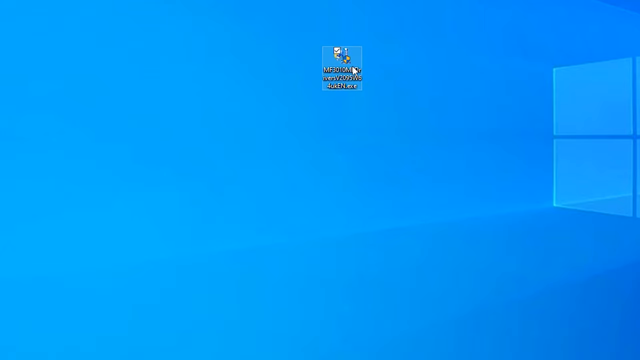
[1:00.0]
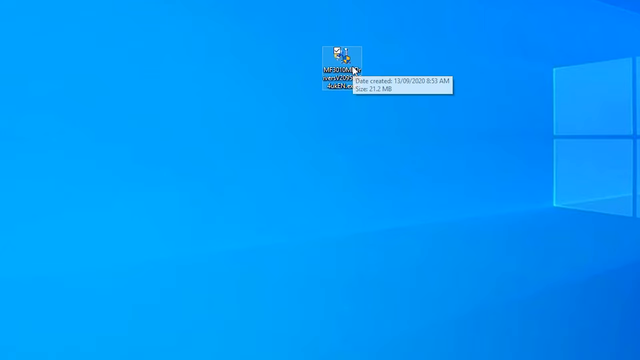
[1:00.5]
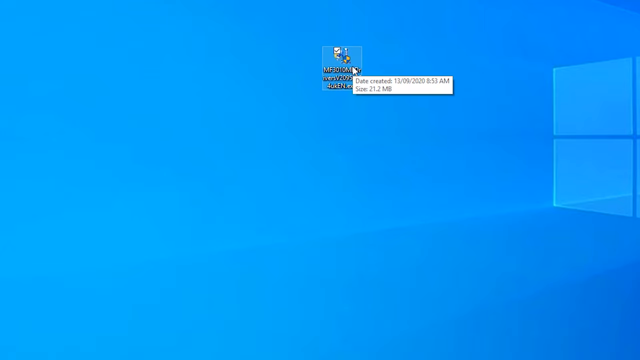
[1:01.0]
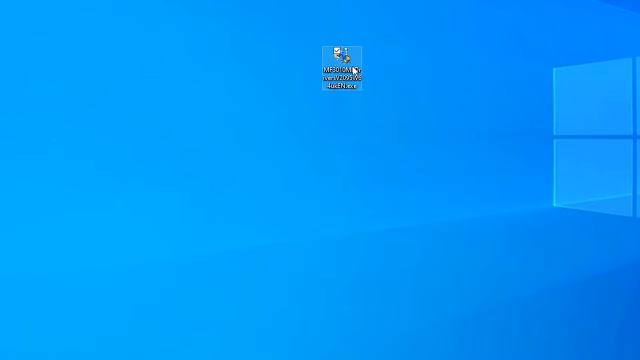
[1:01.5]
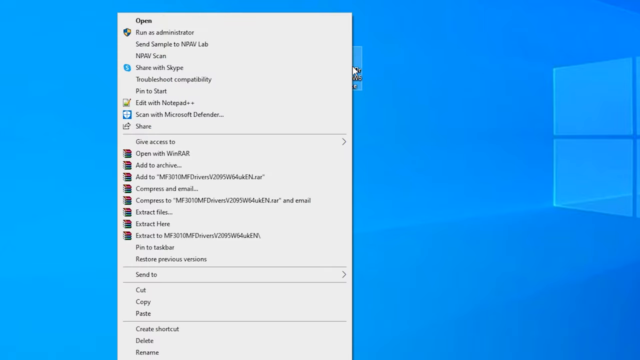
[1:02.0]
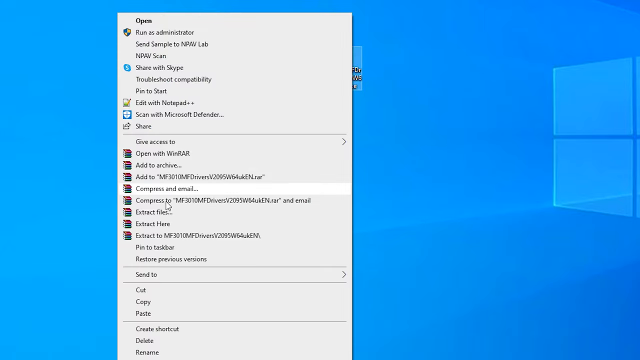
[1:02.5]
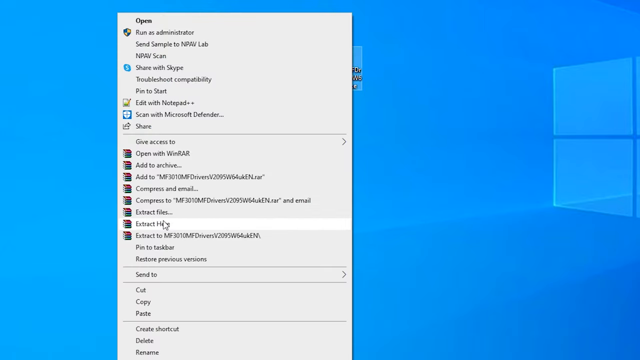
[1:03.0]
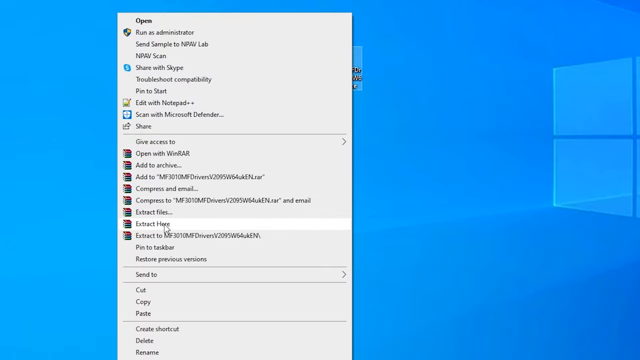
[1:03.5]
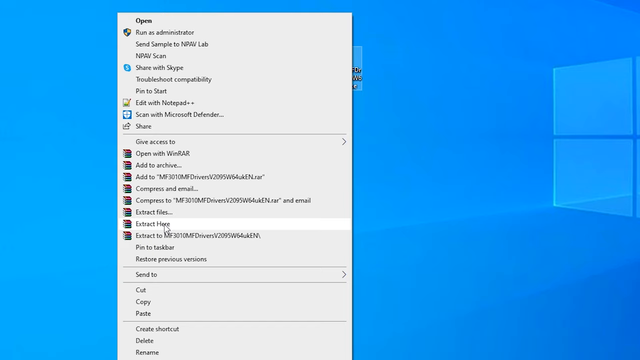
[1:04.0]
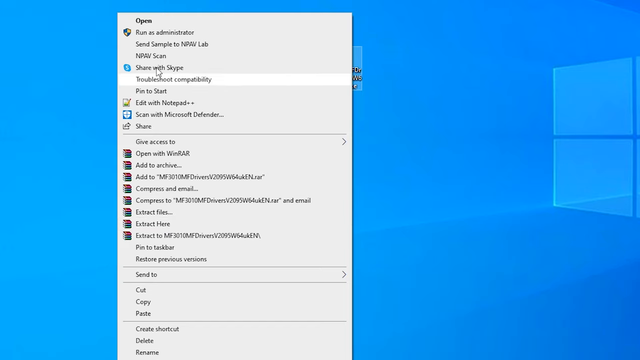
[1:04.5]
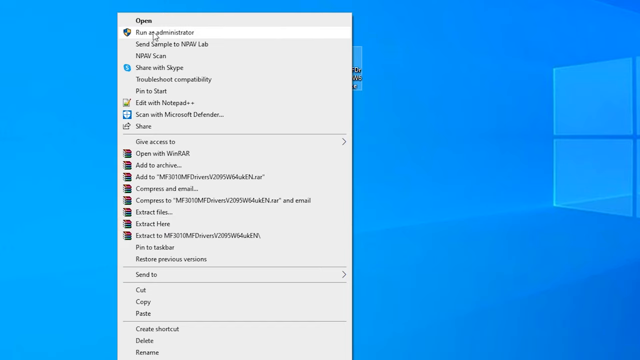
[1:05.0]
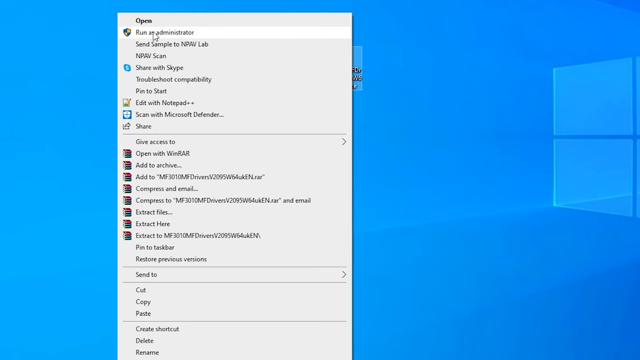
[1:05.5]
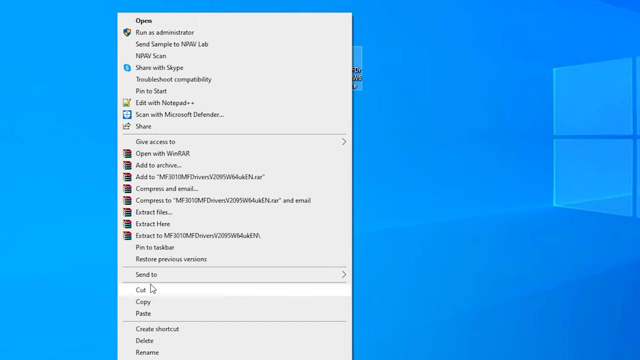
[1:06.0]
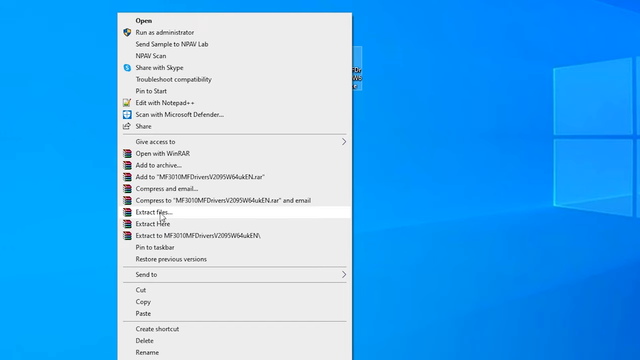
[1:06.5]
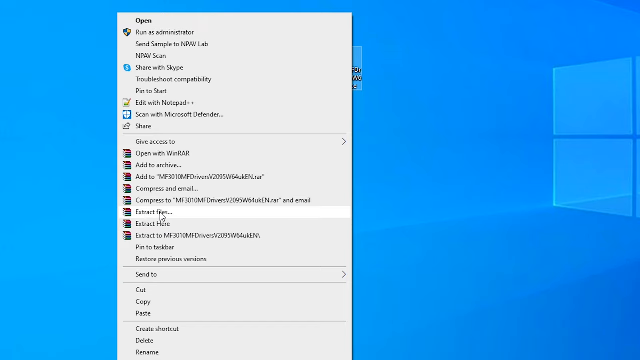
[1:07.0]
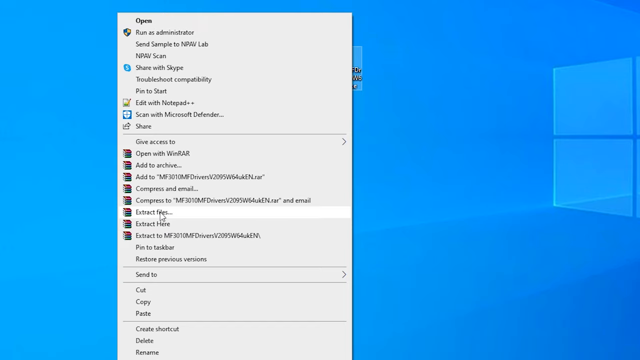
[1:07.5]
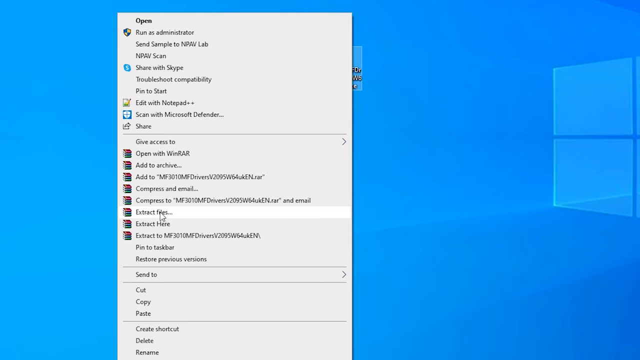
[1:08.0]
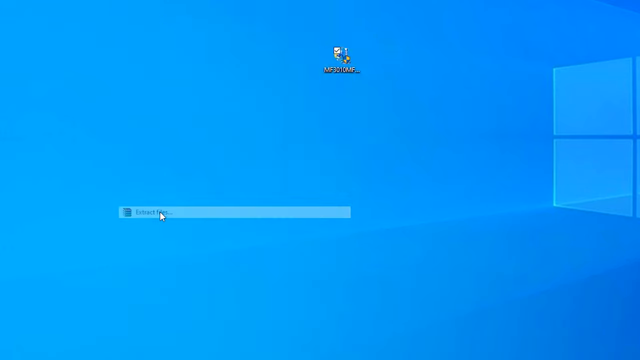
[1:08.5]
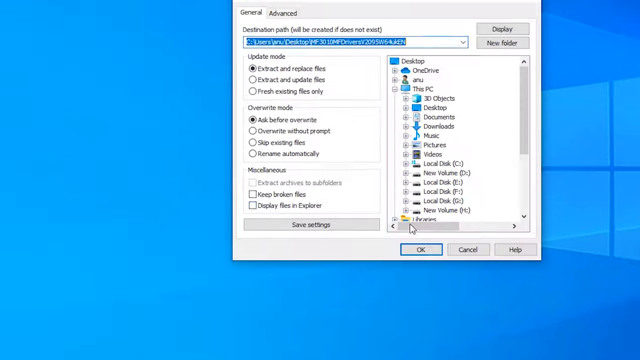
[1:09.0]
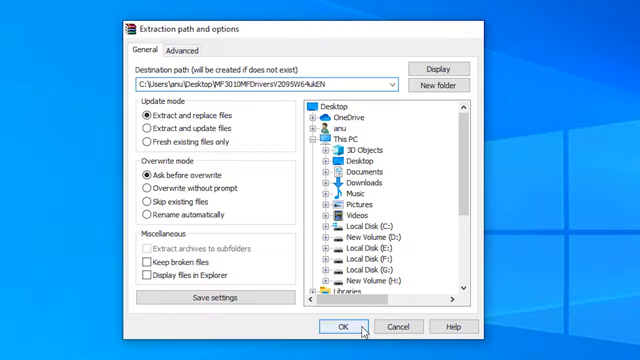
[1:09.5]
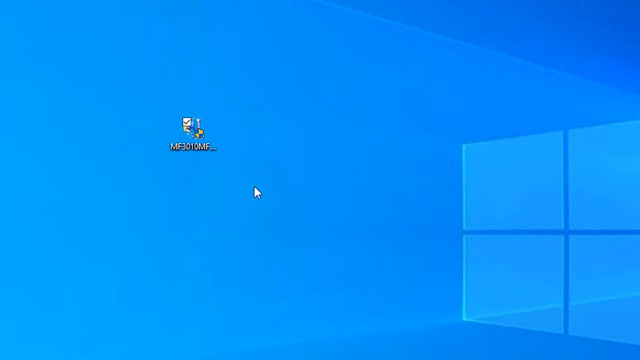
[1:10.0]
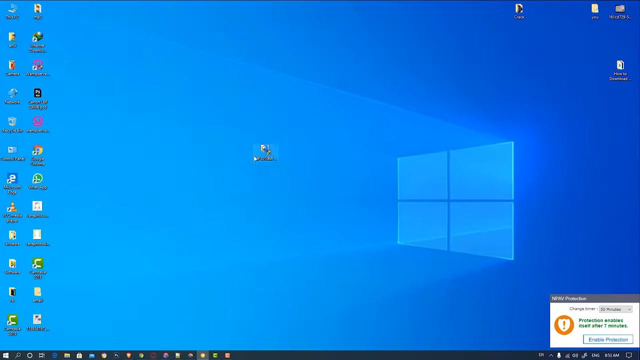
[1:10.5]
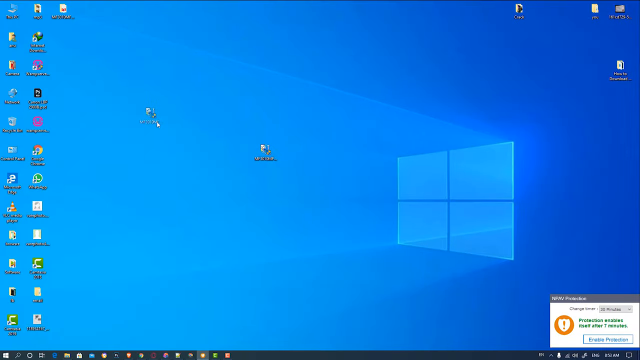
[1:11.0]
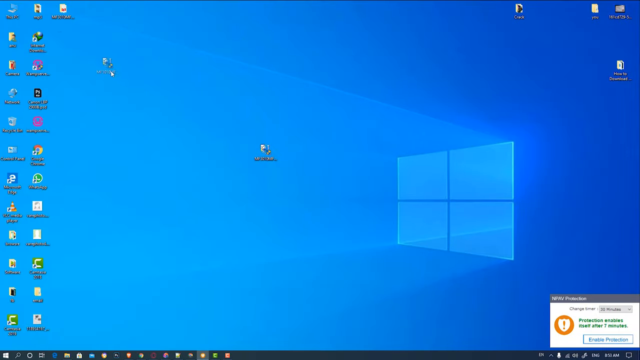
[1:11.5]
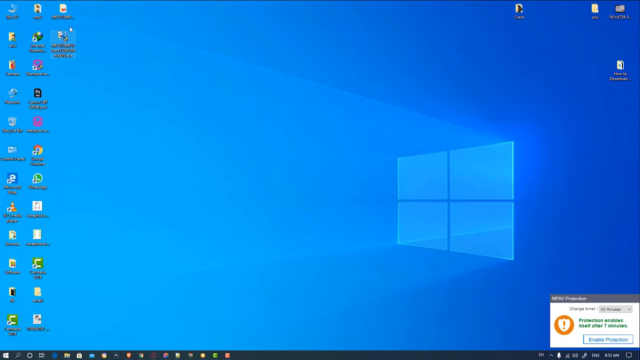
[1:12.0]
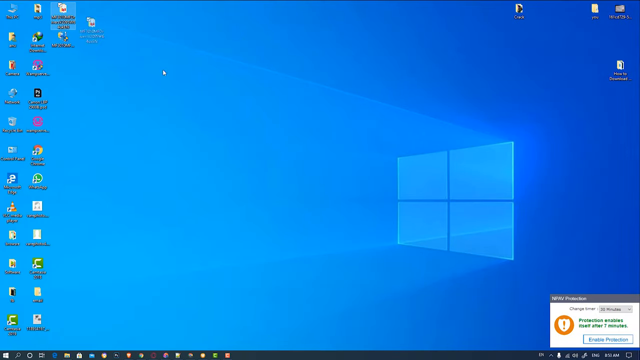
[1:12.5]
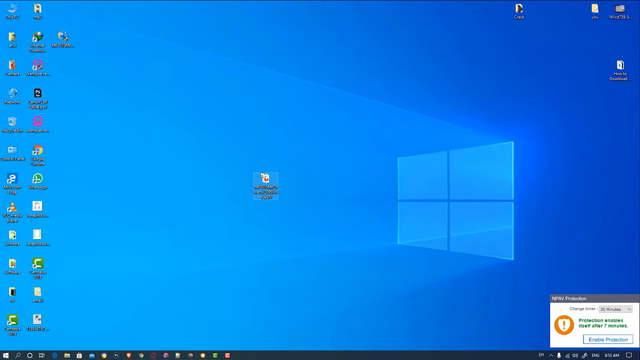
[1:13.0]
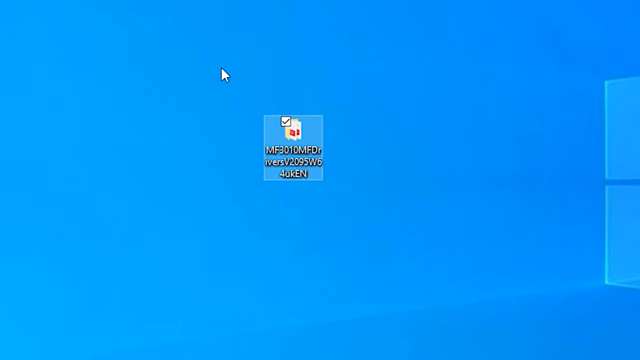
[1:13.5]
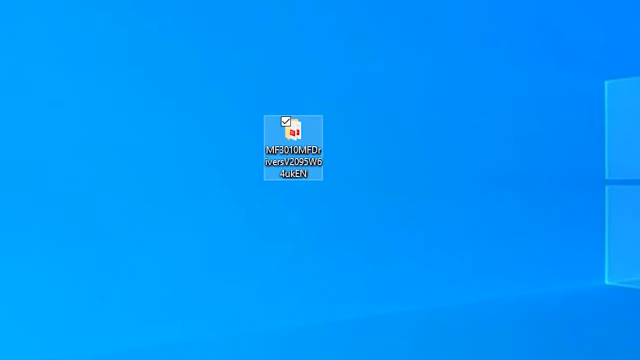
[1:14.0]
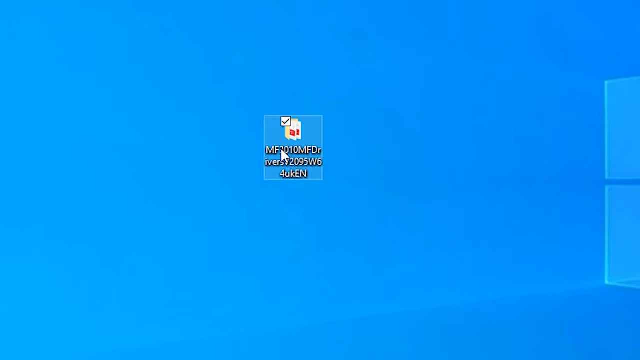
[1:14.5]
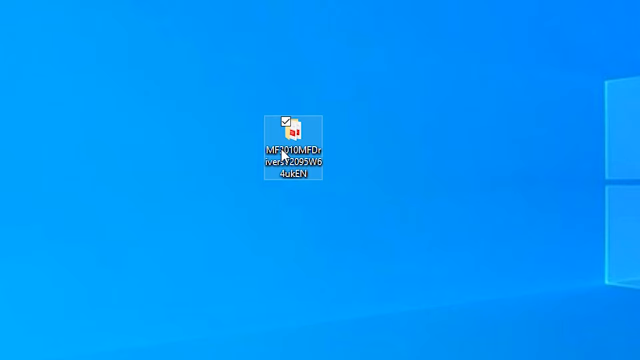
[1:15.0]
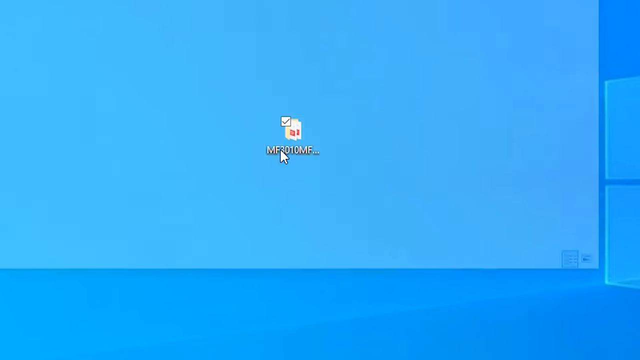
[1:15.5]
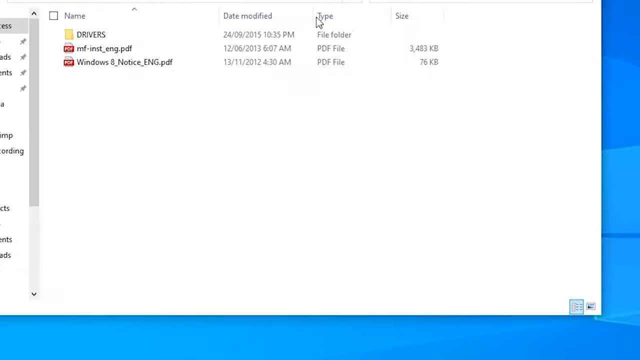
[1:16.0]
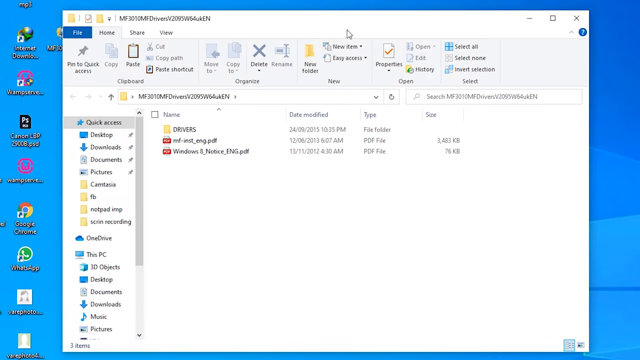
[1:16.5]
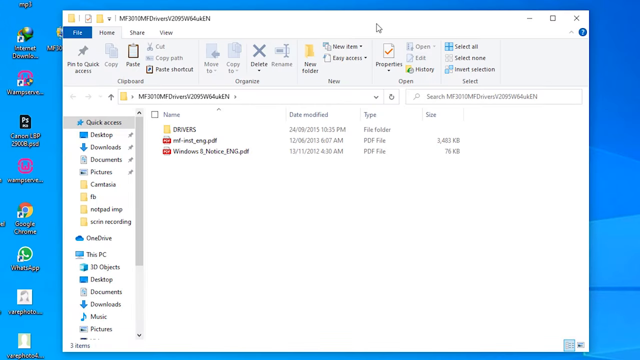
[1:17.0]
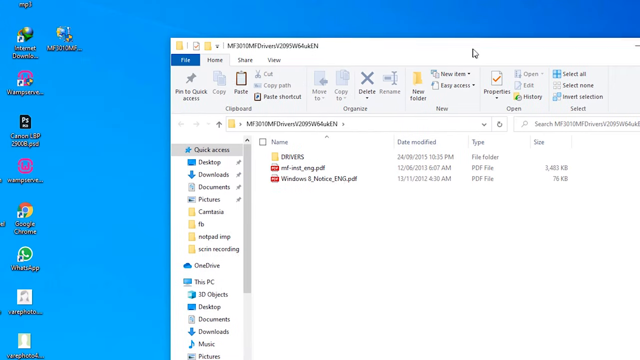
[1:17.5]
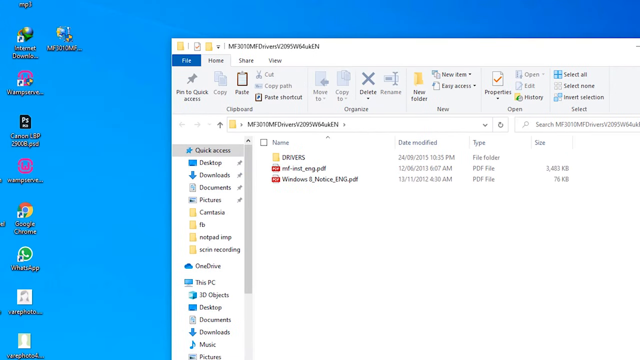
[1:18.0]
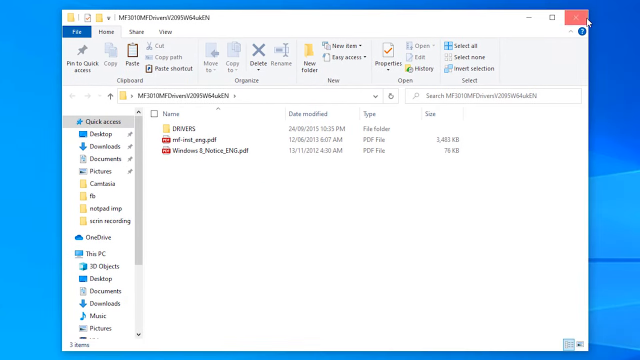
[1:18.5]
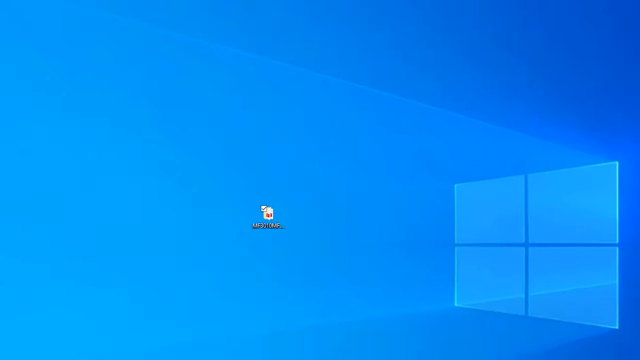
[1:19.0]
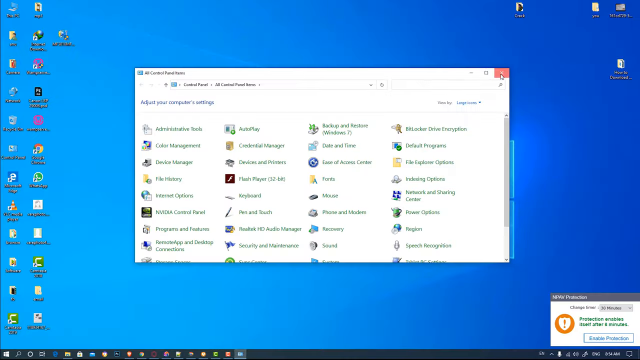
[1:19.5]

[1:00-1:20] The mouse hovers over an icon on the computer screen, the only icon on the screen, and a white label with black text comes out. The user appears to right-click on it, and a full gray menu with several options comes out; as the cursor hovers over the options, each gets highlighted in white. The cursor moves all the way up and then back to the middle, an option is selected, and a button is clicked. The user then goes back to the icon and drags it to the left of the screen, where all the other icons on the home screen are, and puts it alongside them. Next they drag another icon down to the middle and proceed to click on various buttons on different menus.